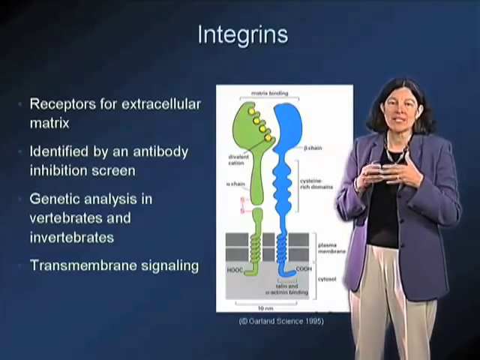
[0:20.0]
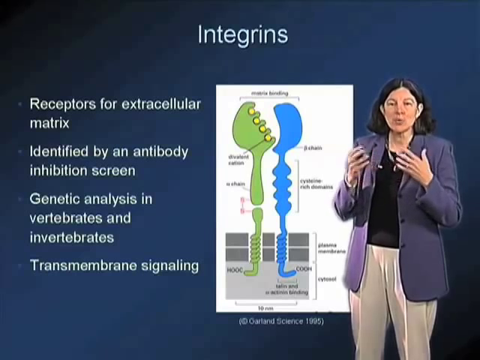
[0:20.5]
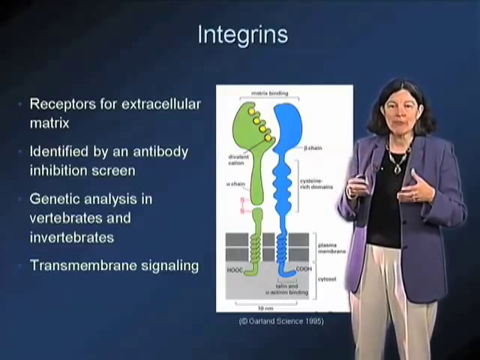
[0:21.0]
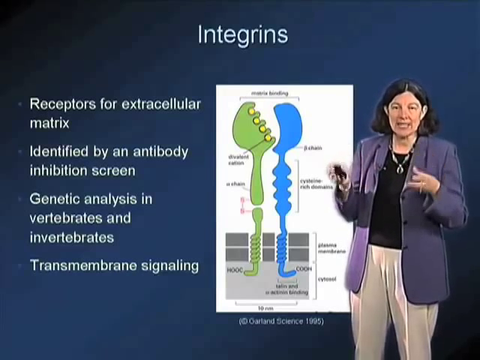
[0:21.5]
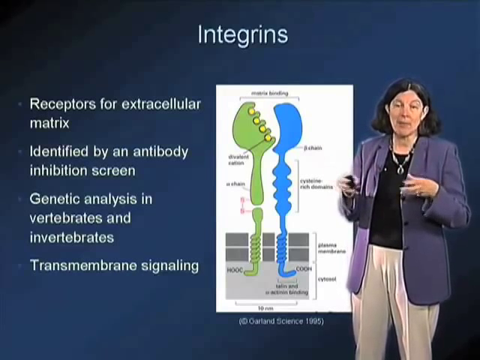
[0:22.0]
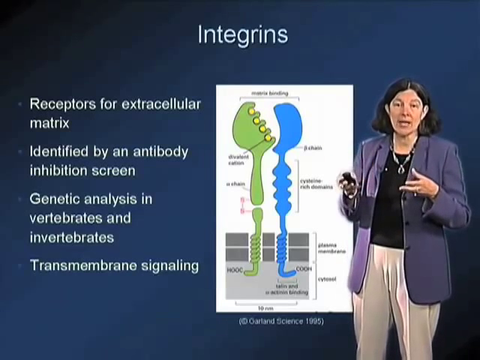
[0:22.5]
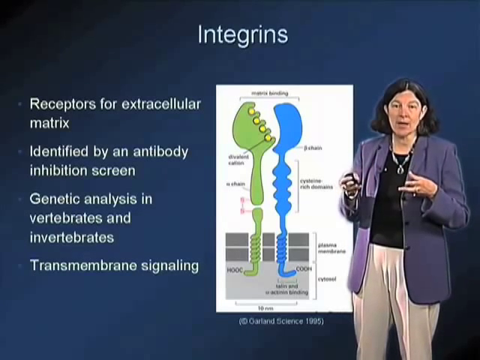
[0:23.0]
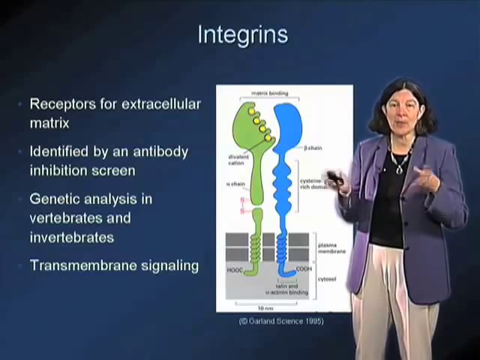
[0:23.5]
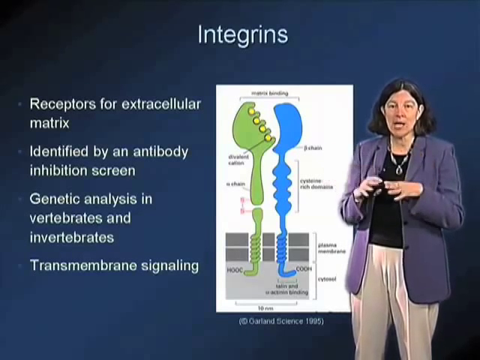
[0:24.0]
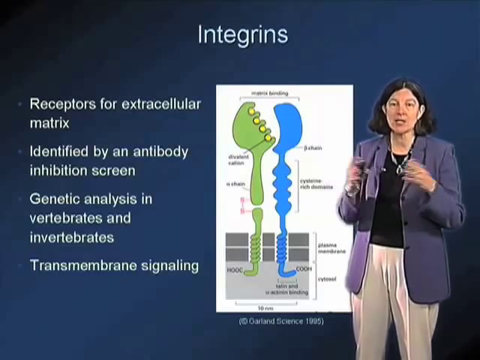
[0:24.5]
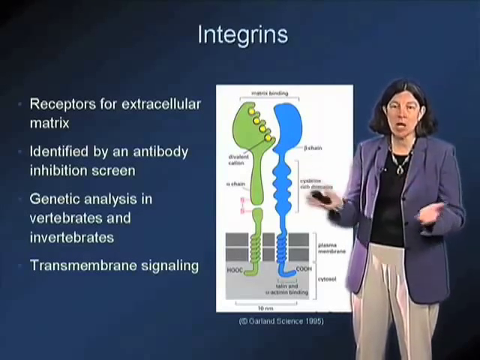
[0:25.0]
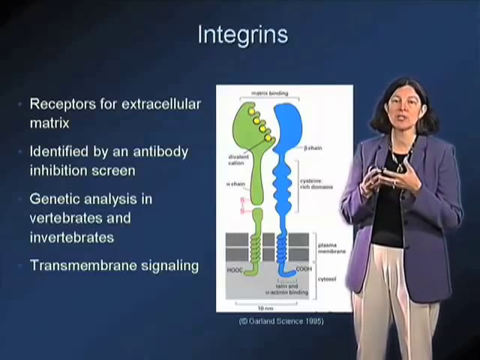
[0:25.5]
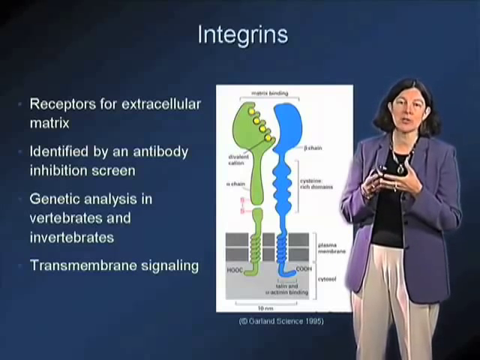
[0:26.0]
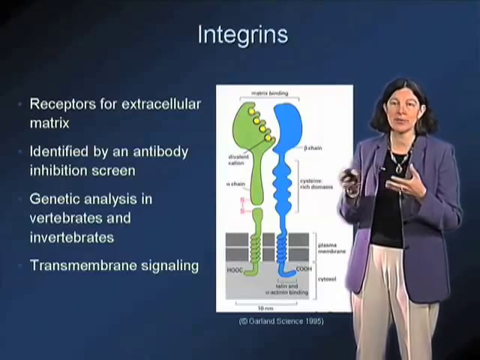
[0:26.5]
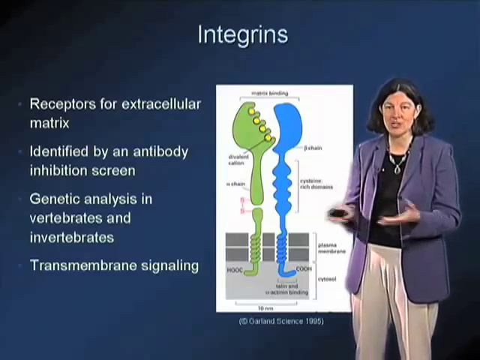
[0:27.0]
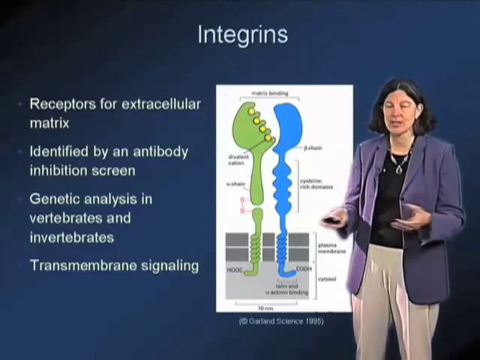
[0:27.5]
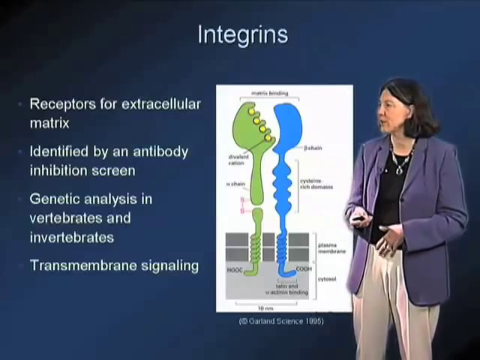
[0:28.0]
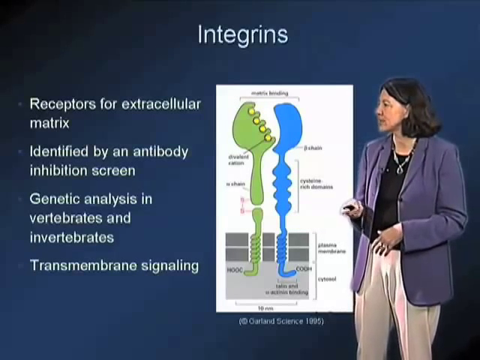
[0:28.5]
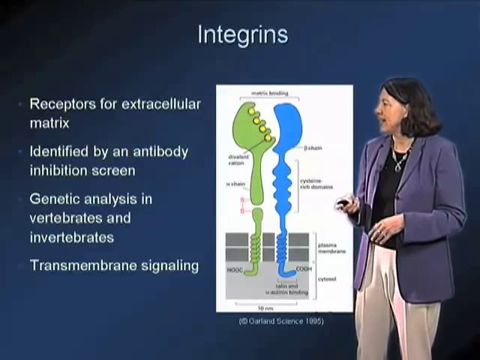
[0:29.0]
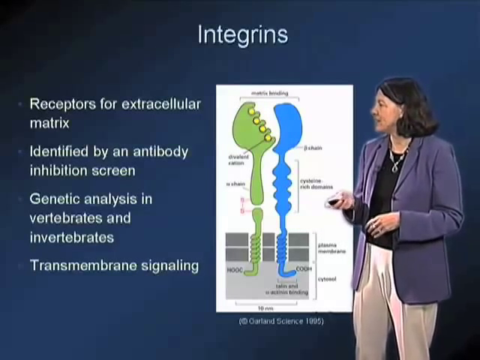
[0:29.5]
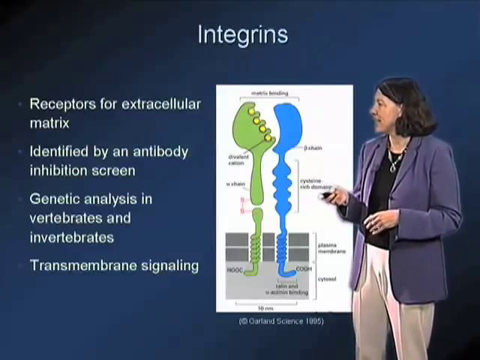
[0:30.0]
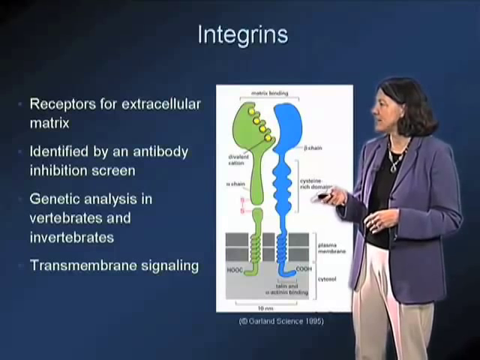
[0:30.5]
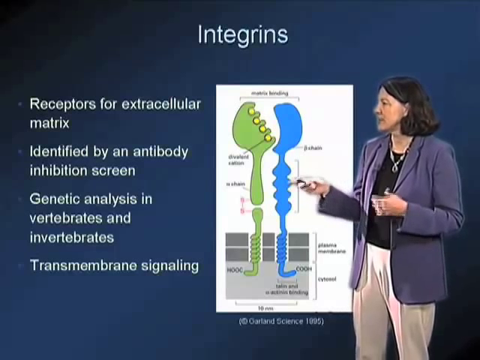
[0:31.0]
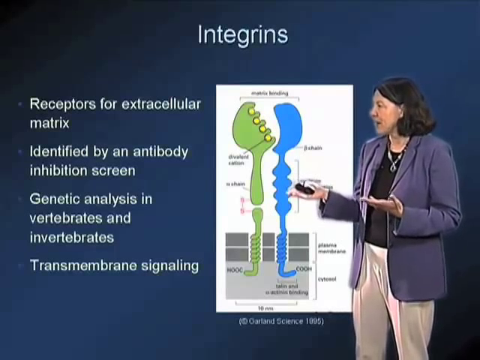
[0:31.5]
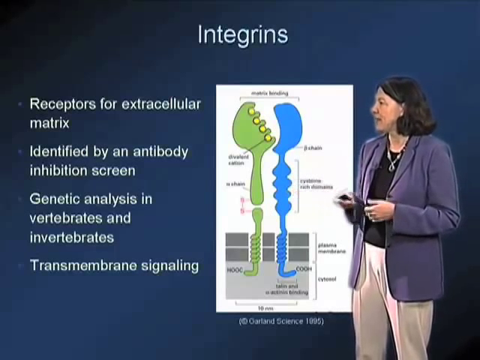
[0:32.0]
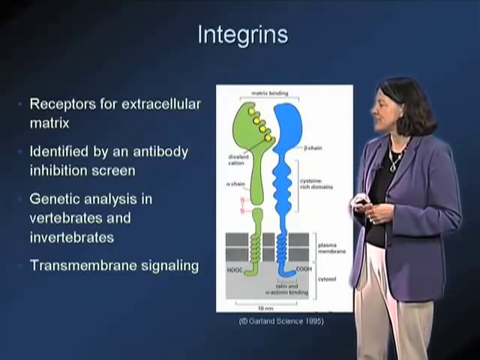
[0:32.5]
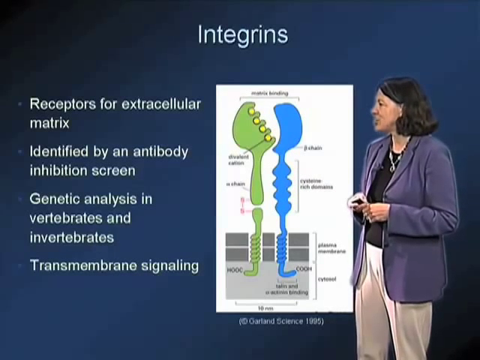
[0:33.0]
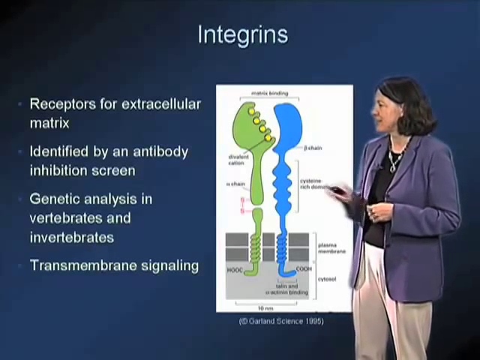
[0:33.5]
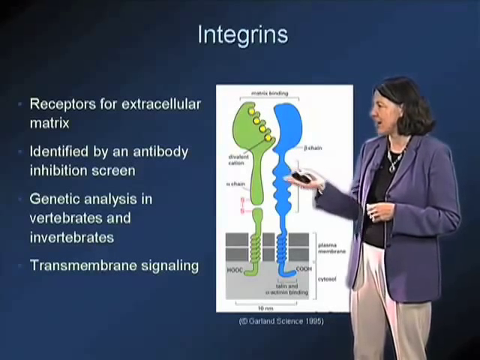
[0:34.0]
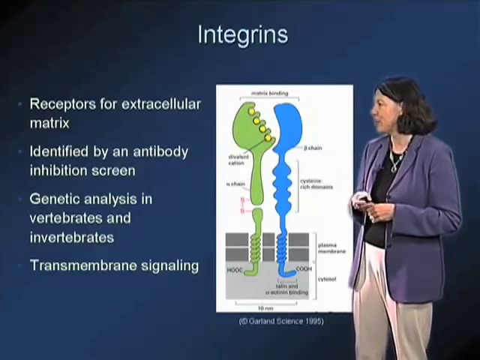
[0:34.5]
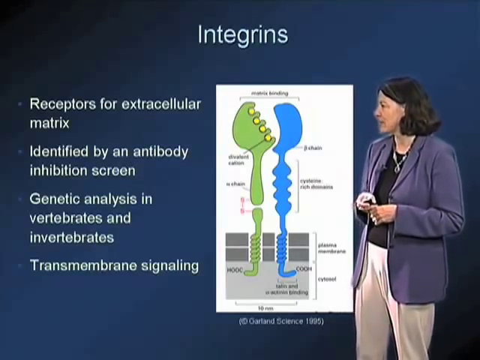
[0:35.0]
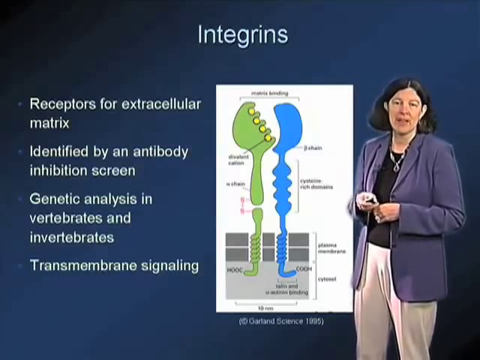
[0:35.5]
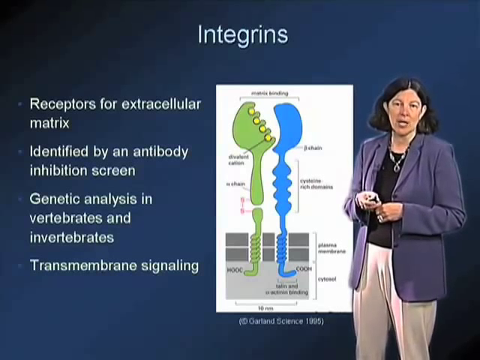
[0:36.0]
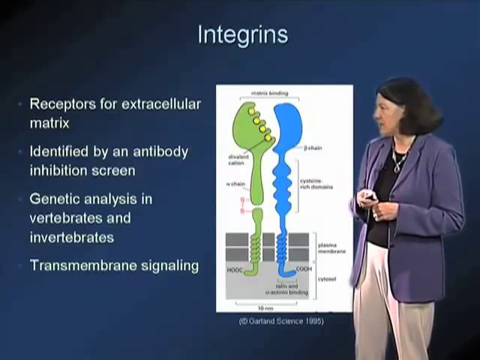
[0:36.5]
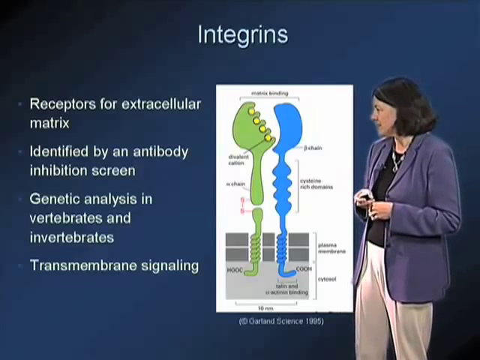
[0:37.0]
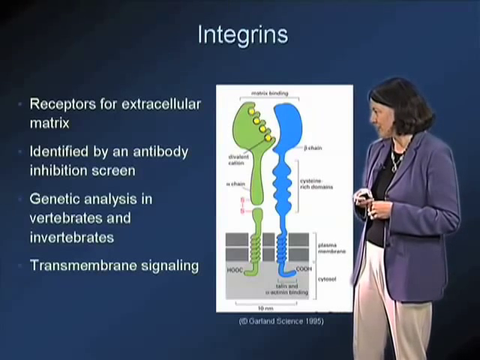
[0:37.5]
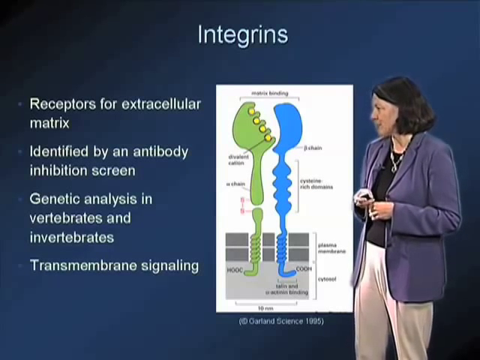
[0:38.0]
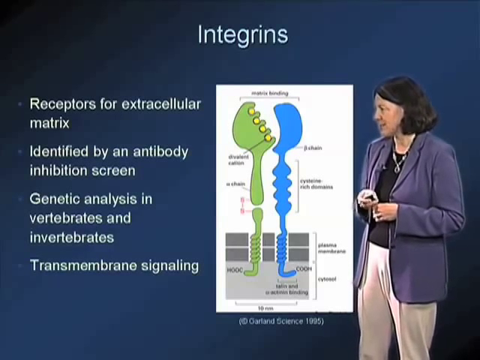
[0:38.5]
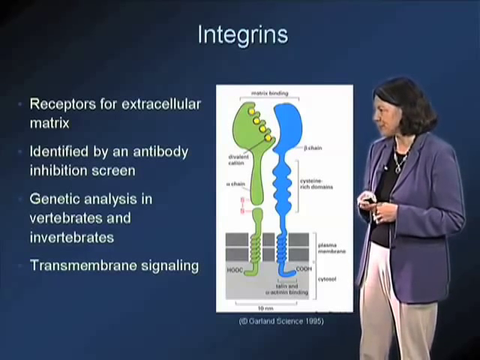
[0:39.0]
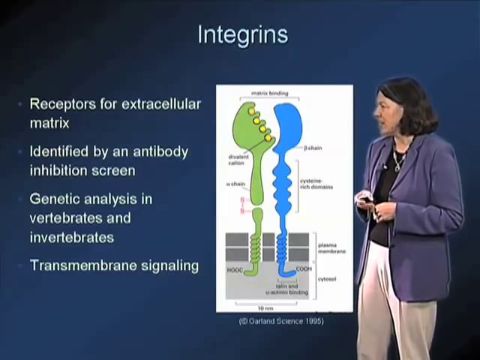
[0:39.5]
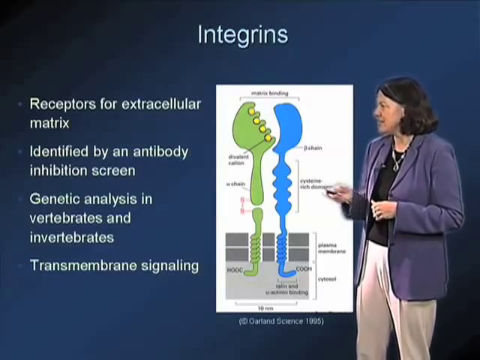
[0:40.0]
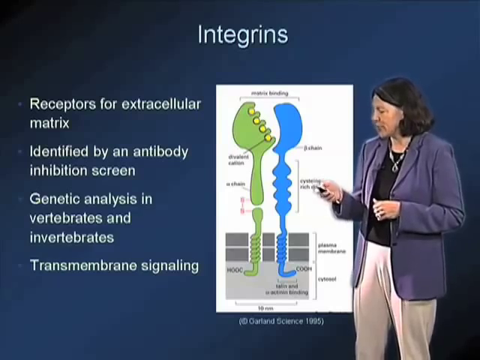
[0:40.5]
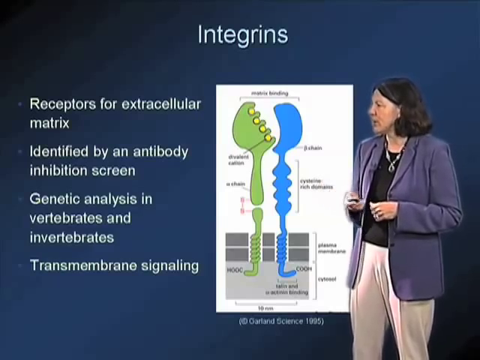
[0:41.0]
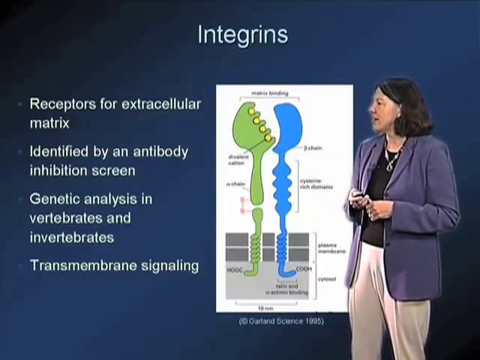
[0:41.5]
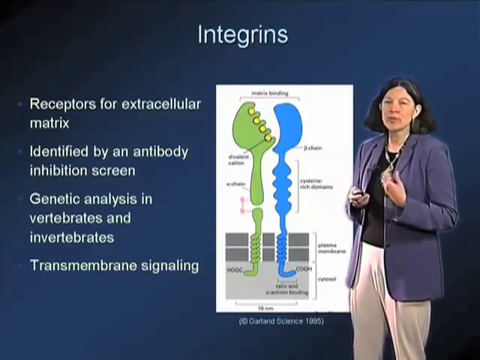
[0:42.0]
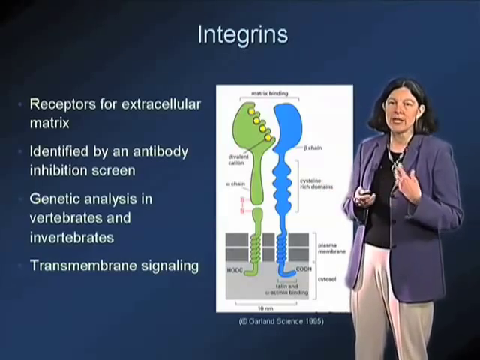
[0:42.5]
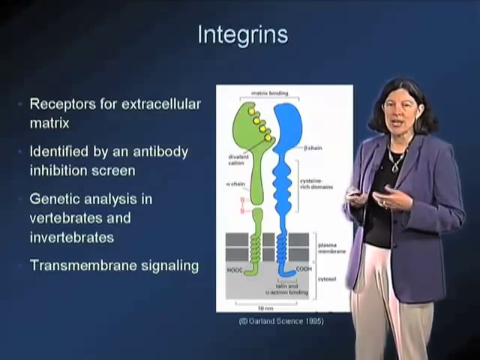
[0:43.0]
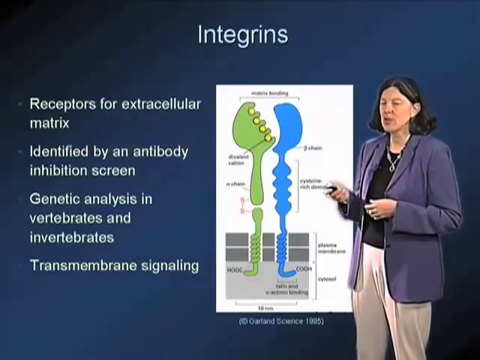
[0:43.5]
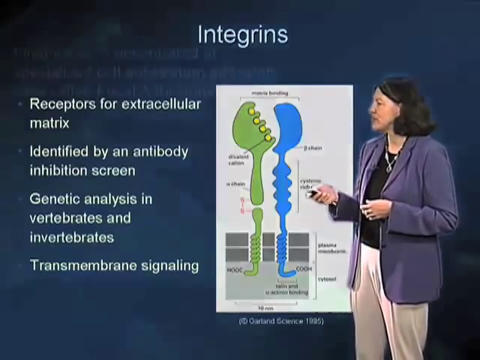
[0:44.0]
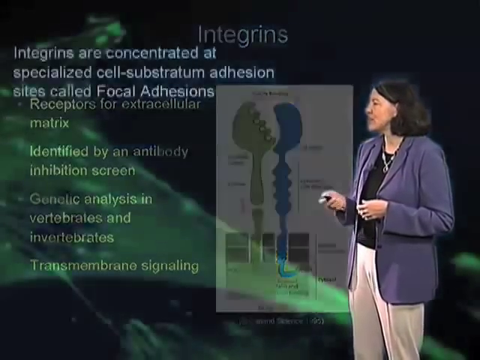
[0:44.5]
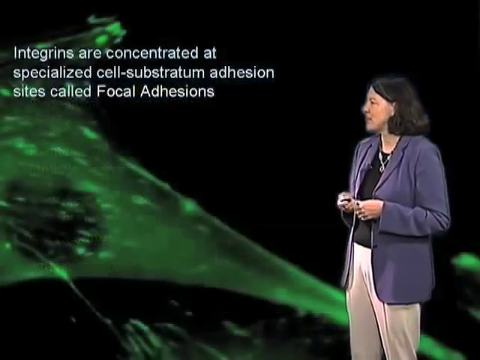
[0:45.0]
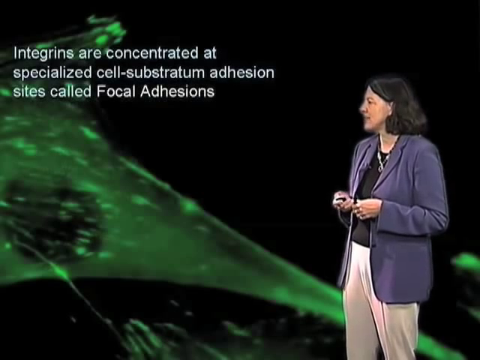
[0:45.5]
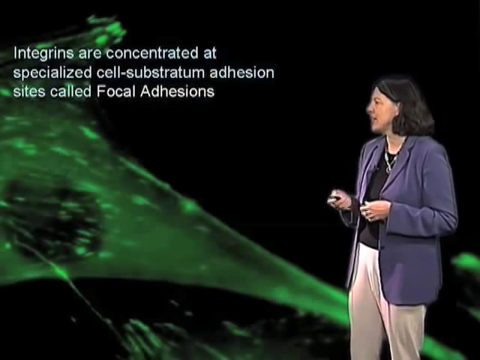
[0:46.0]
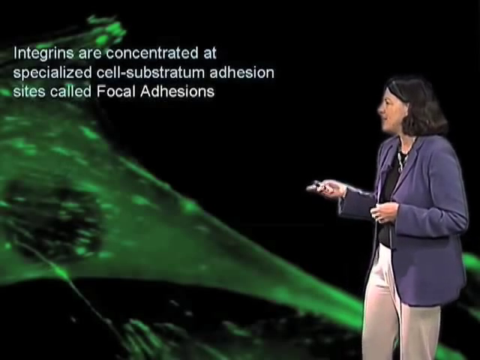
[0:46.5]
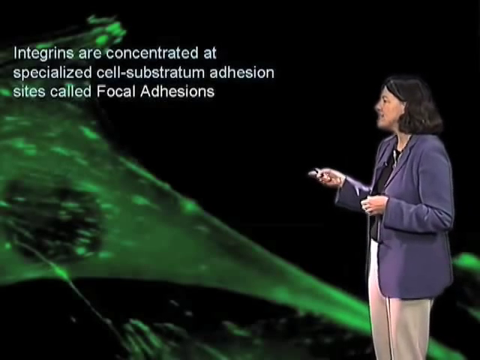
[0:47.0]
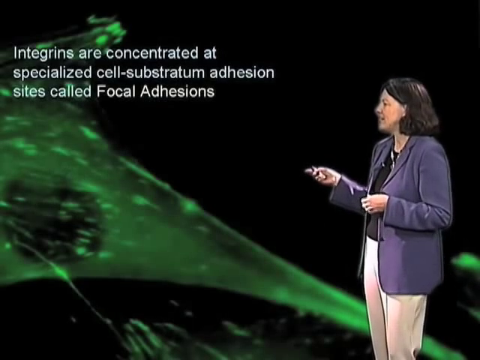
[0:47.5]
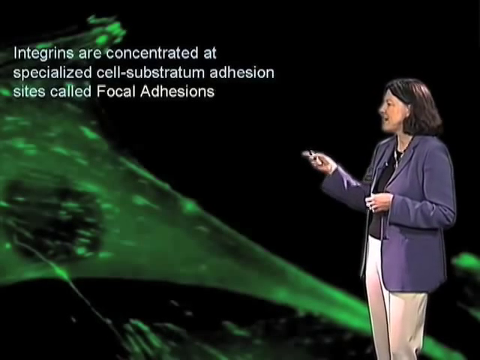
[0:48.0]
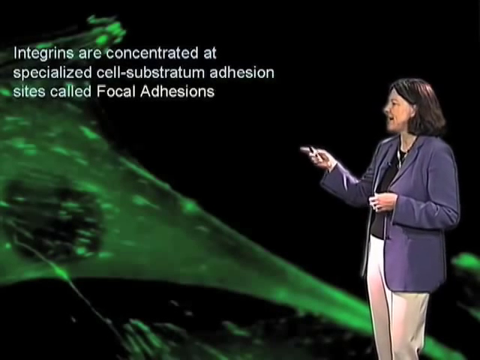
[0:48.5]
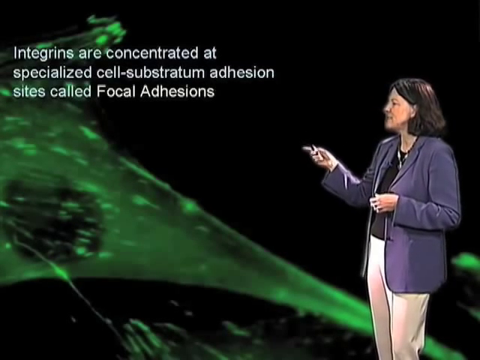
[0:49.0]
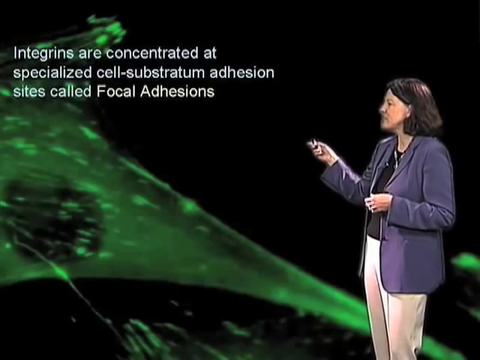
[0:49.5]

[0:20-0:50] A woman on the right of the screen looks toward the camera and speaks. Behind her is a background that looks like a presentation: white text on a blue background with the title "Integrins" at the top, a small amount of explanatory text, and a diagram beside the woman showing a blue and green representation of the concept. She uses her hands to emphasize movement and her points, holding a clicker in her right hand. She looks at the screen, points to various parts of the text, then clicks the clicker to change the page. The page changes to a black and green background covering the entire background, and white text appears identifying what integrins are and where they are concentrated. She points to that part of the text while talking.